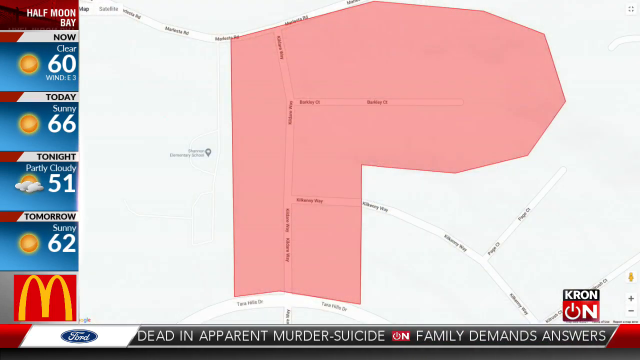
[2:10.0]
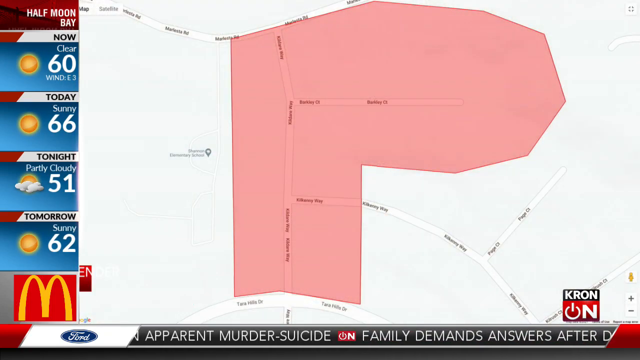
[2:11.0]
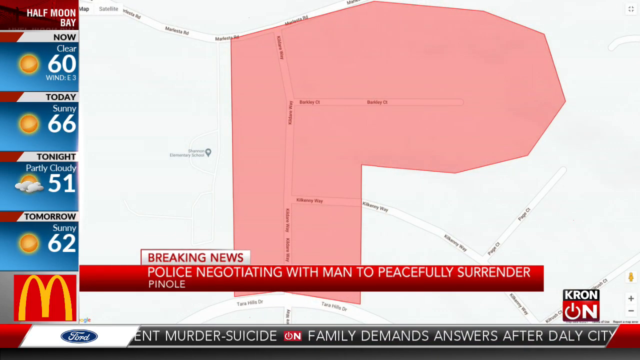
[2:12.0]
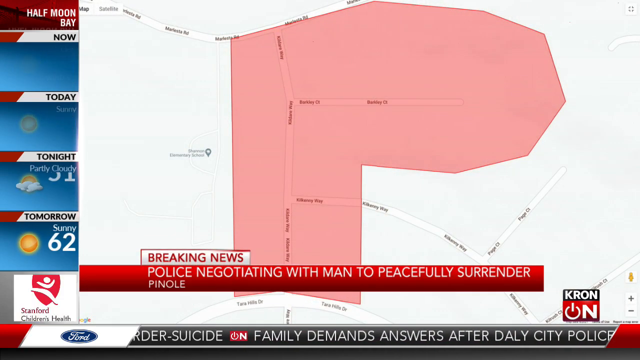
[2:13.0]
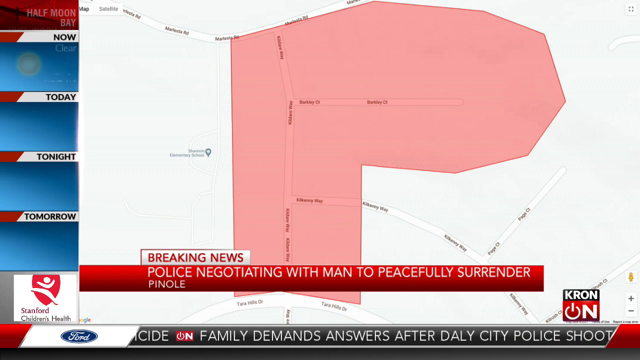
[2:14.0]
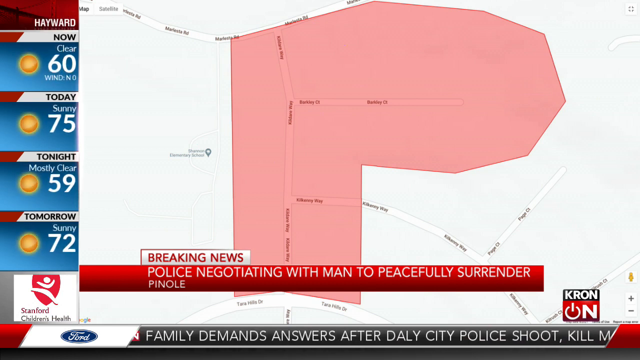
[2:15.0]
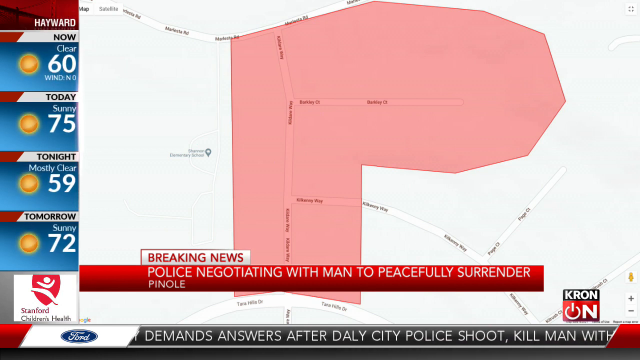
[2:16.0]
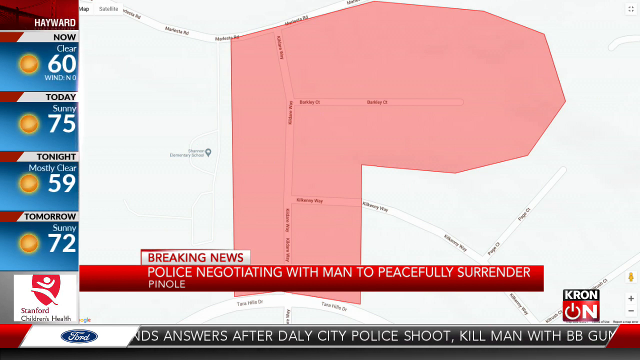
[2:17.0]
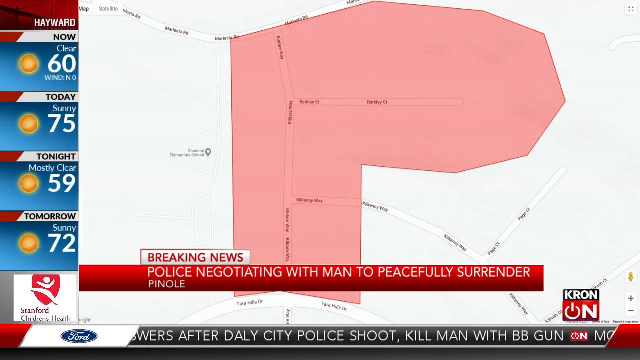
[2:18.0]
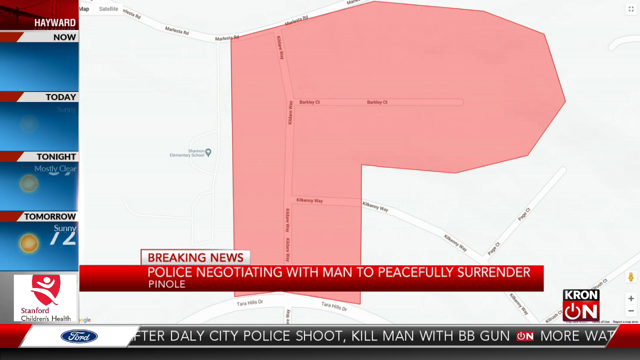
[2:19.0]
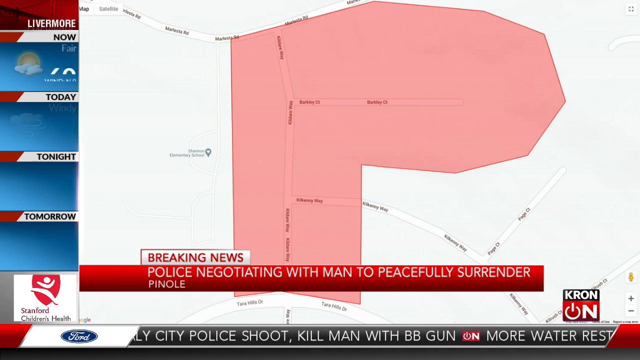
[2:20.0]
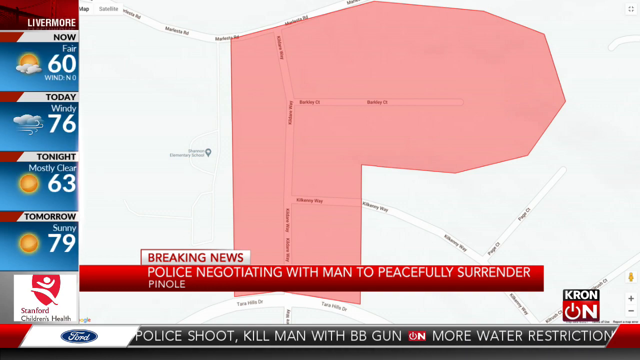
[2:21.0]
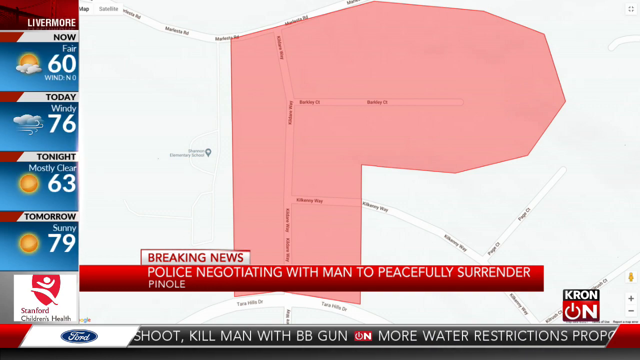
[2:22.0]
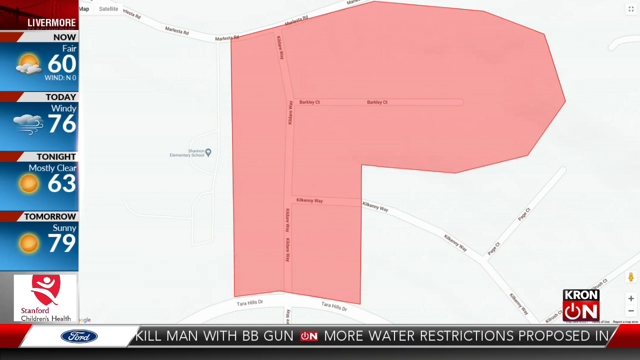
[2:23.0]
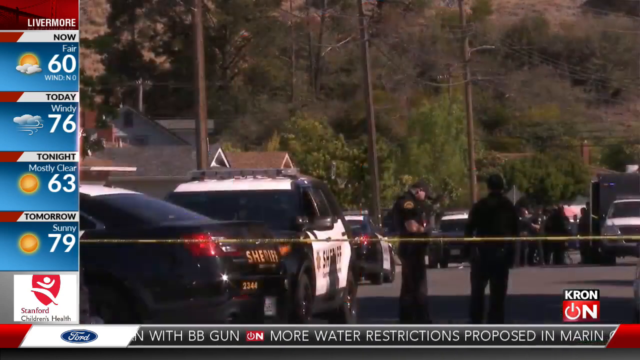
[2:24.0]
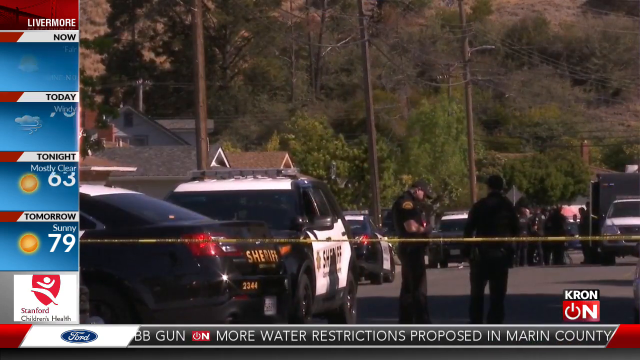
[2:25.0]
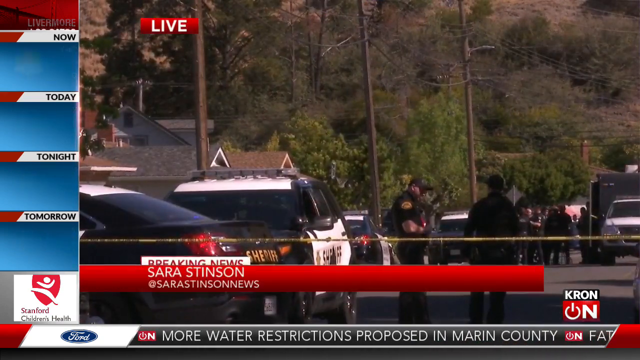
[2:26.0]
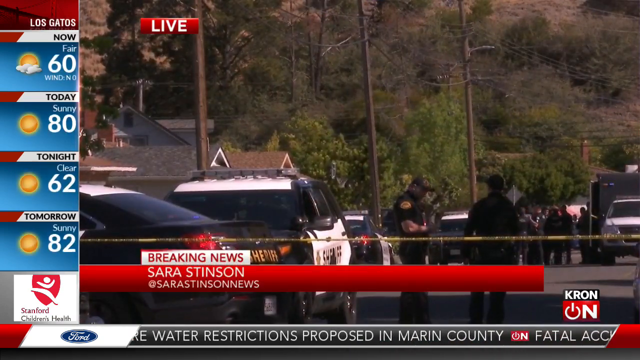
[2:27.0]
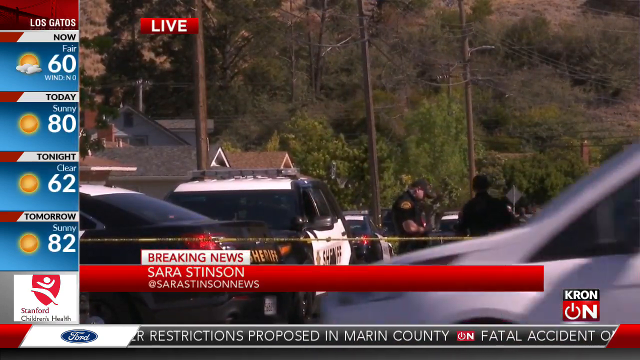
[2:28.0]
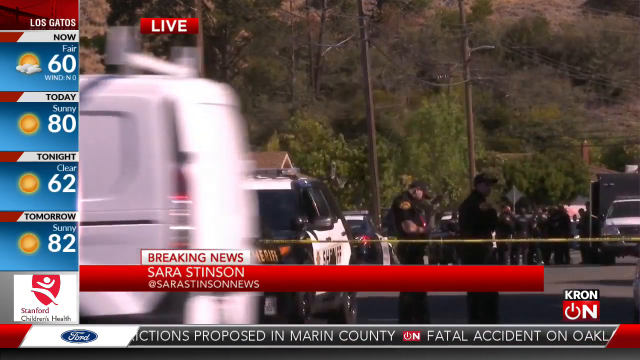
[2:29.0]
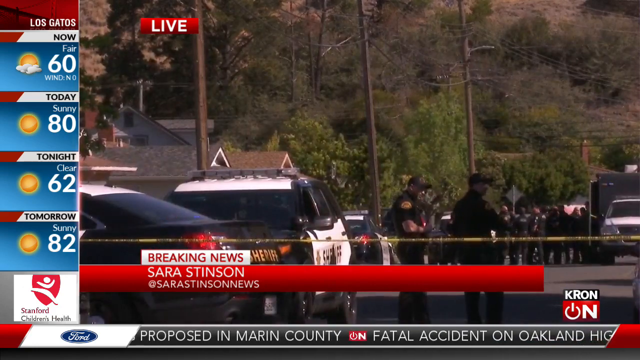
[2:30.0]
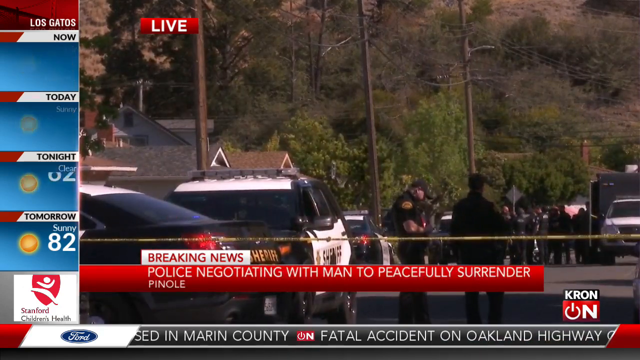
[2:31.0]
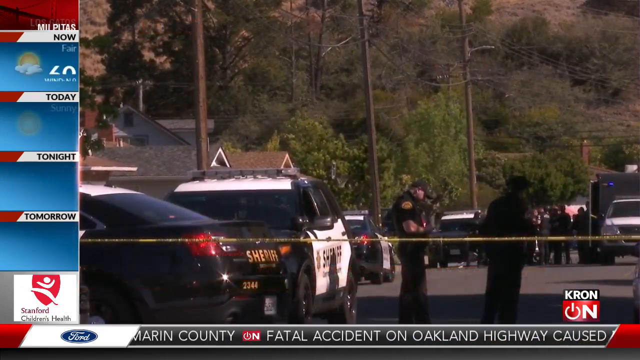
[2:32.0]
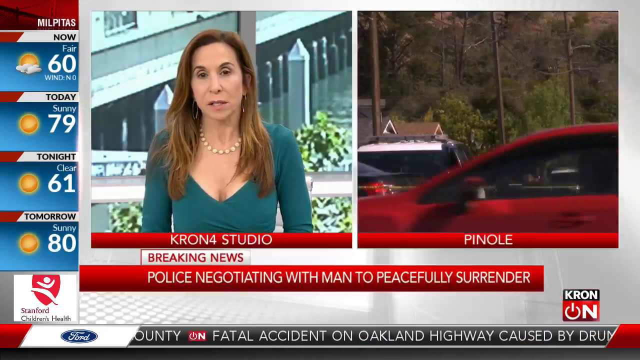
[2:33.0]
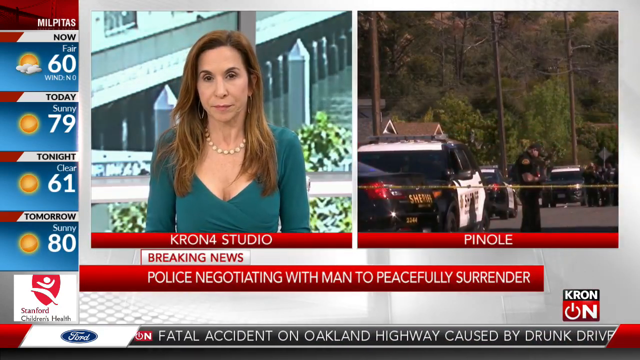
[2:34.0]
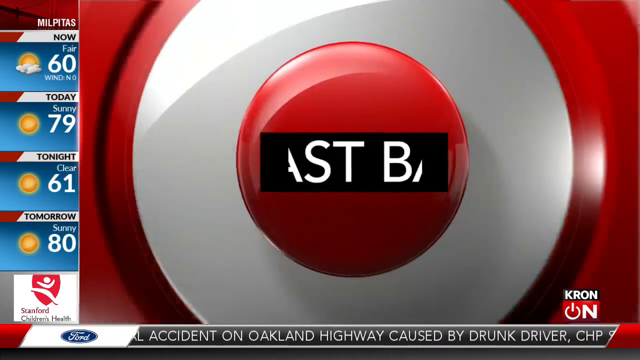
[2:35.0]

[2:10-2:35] The left column now shows the weather in Livermore and then changes to Los Gatos. The McDonald's sign is gone, replaced by Stanford's Children's Health, and at the bottom some titles pass by. The main image shows a partial map of the town of Pinole with an area marked in pink, the area where the situation is supposed to be happening. A red bar on screen states that police are negotiating with men to peacefully surrender, with a small bar on top of it marking it as breaking news. The image stays on the map for a long time, then moves to a live image. The breaking news bar changes and identifies the reporter, Alice Stinson.